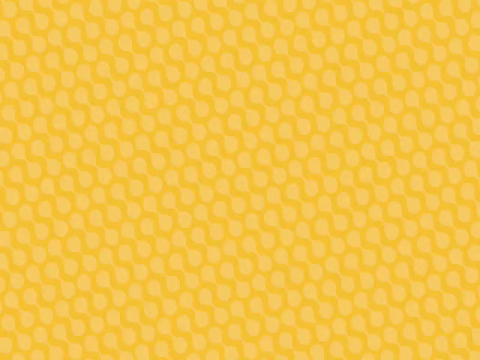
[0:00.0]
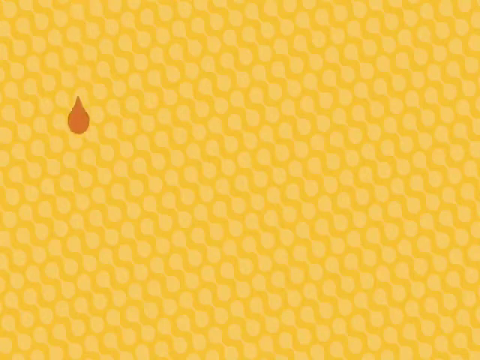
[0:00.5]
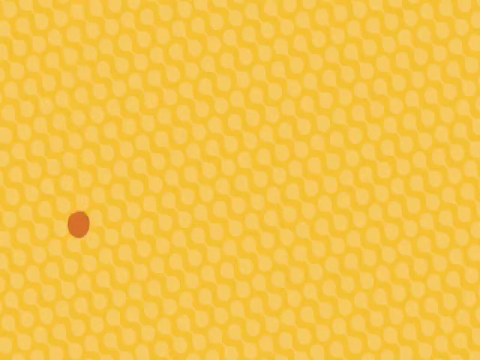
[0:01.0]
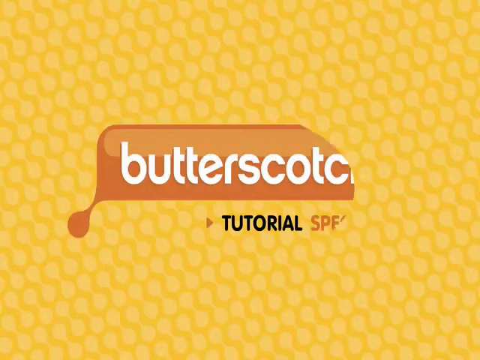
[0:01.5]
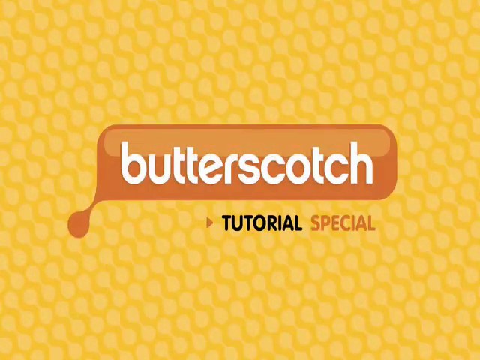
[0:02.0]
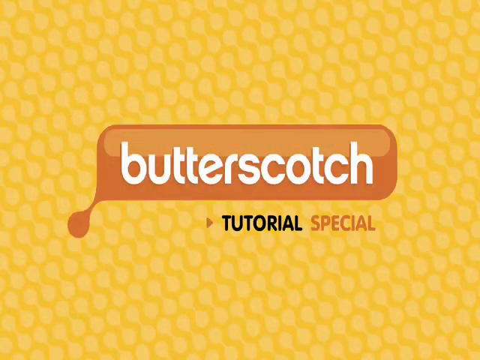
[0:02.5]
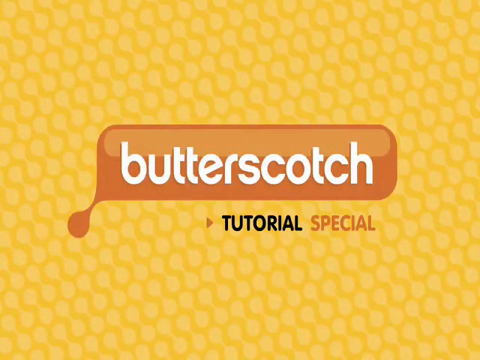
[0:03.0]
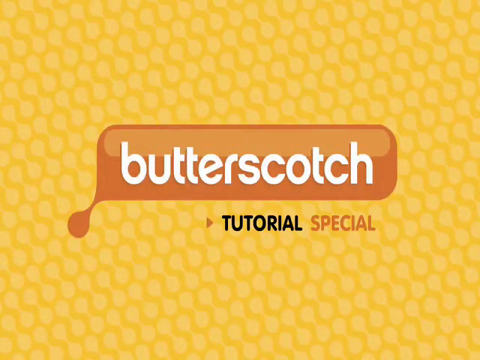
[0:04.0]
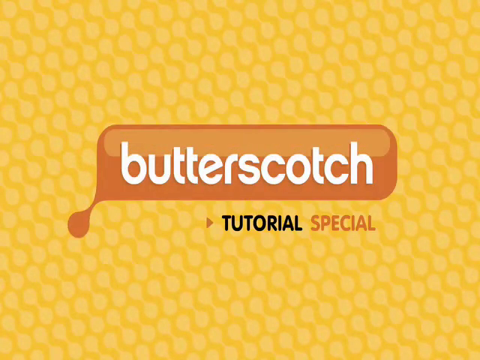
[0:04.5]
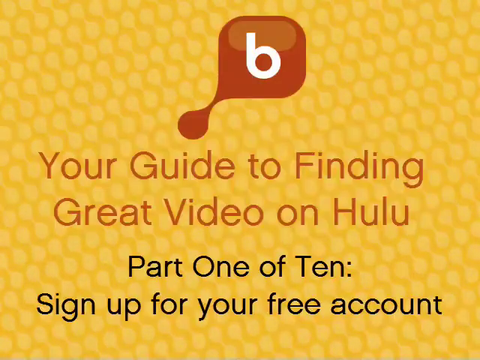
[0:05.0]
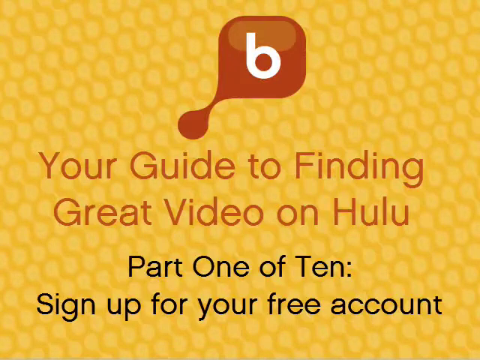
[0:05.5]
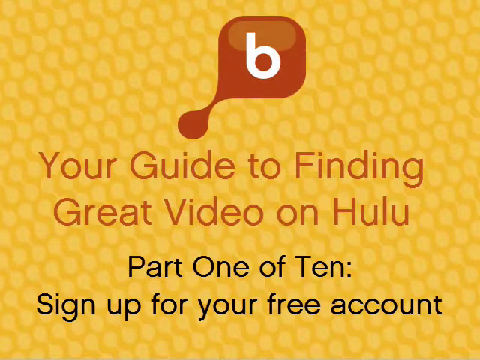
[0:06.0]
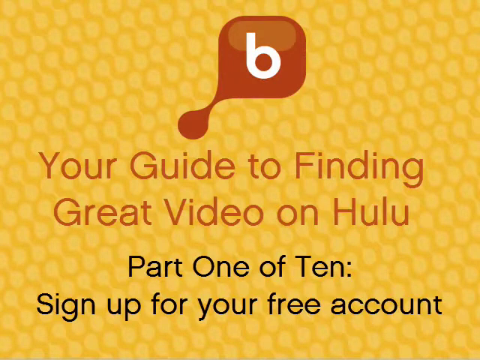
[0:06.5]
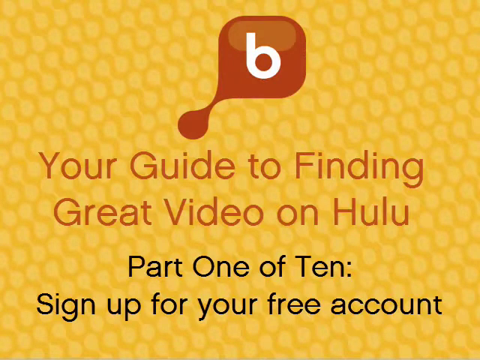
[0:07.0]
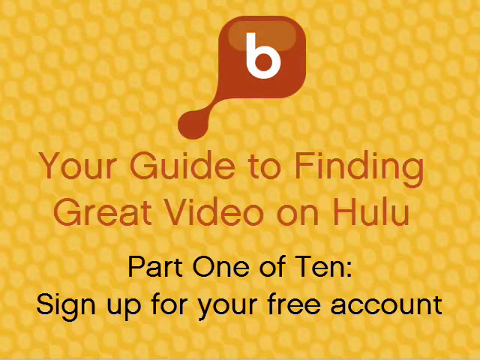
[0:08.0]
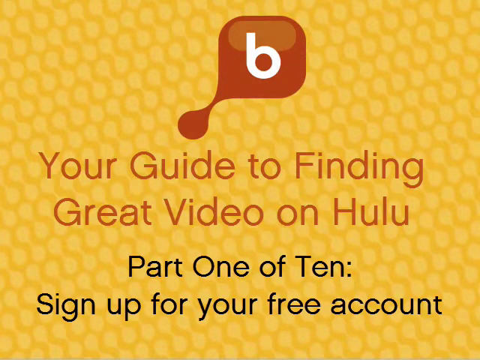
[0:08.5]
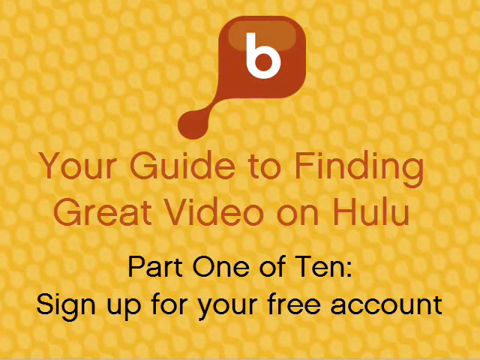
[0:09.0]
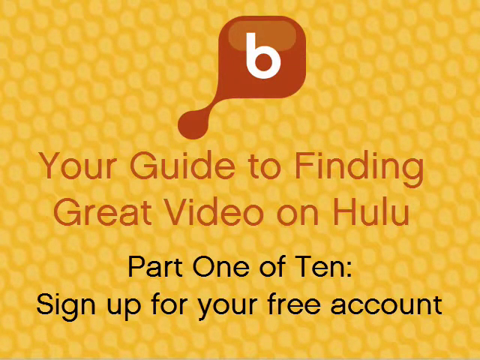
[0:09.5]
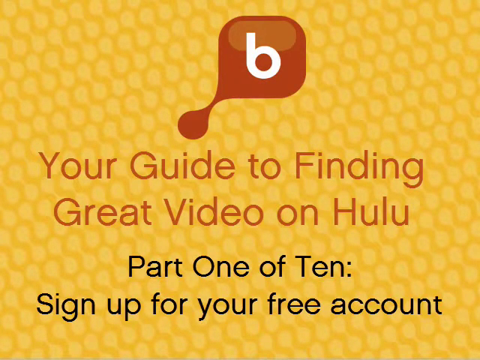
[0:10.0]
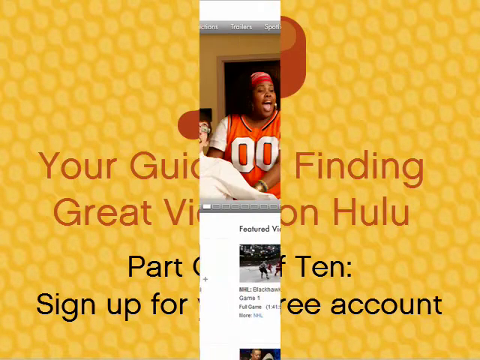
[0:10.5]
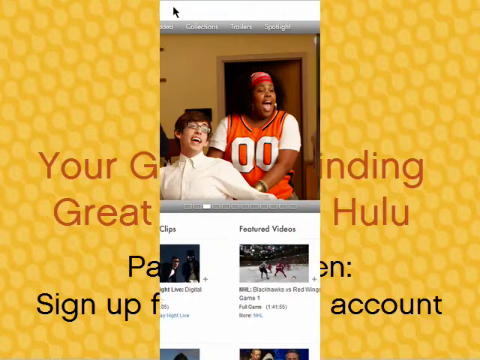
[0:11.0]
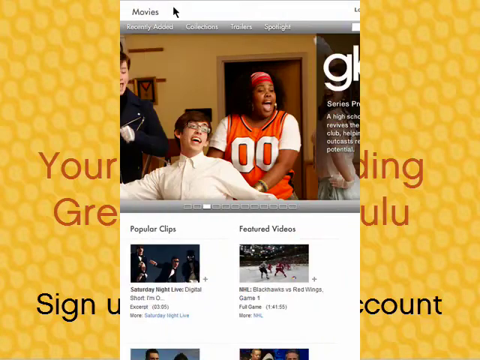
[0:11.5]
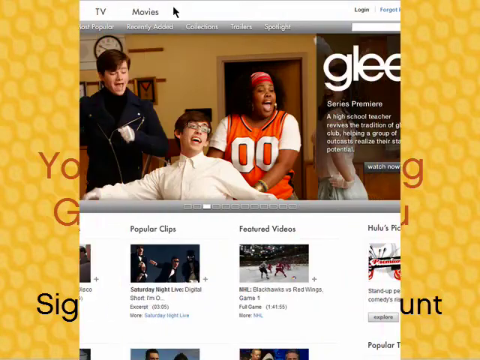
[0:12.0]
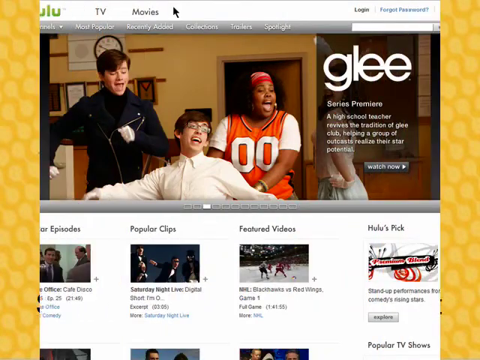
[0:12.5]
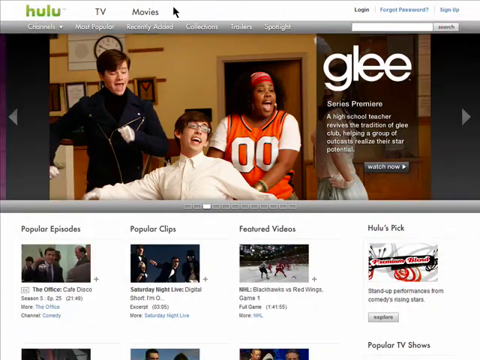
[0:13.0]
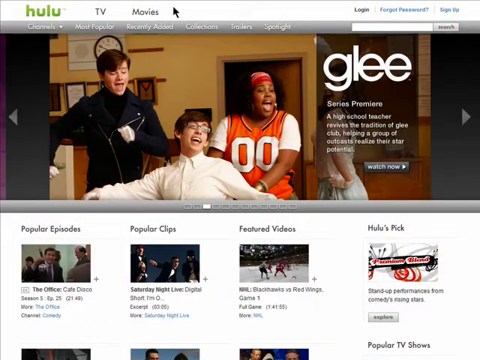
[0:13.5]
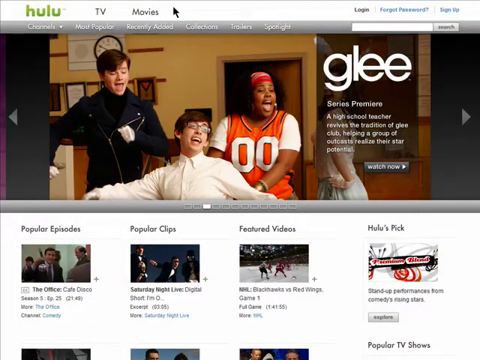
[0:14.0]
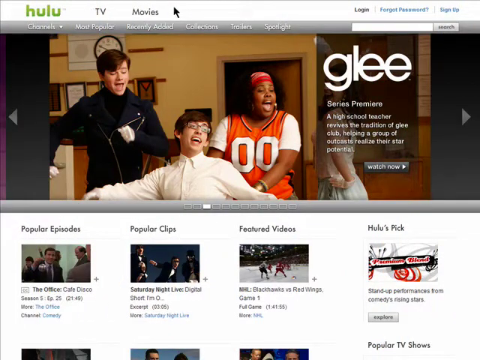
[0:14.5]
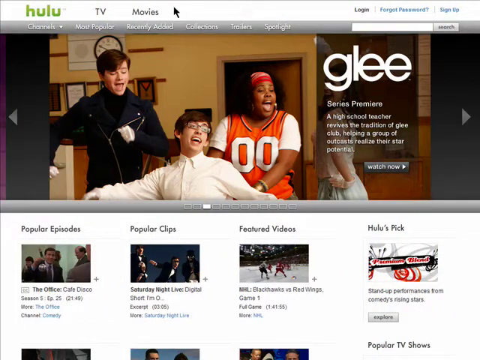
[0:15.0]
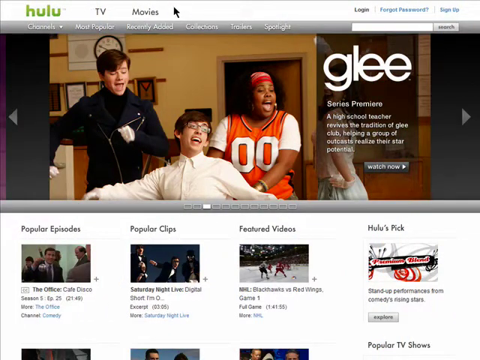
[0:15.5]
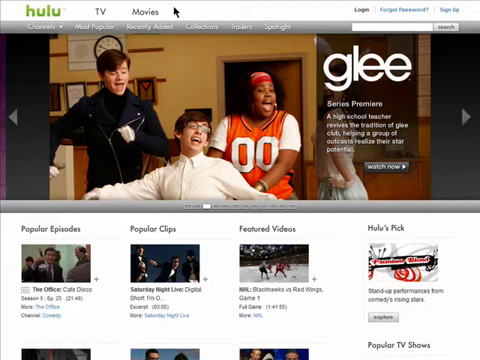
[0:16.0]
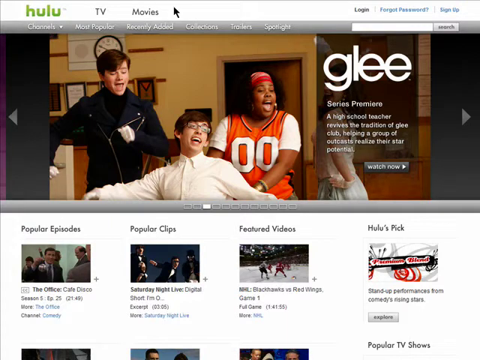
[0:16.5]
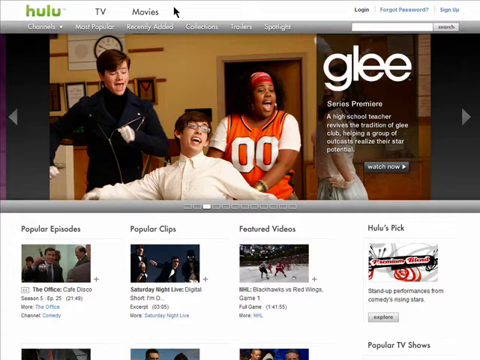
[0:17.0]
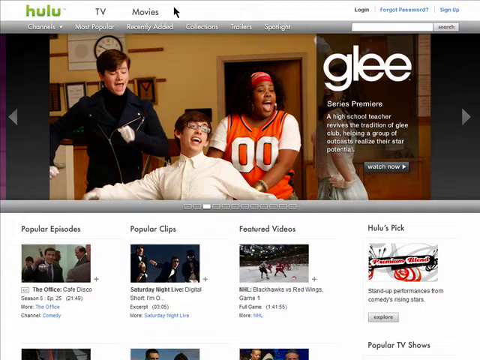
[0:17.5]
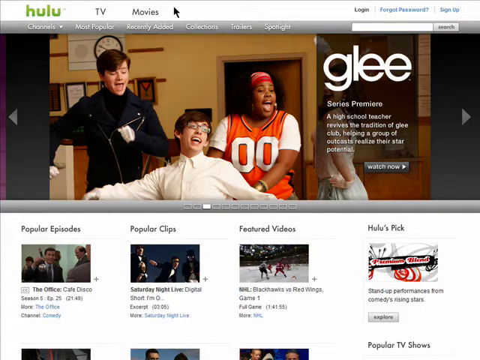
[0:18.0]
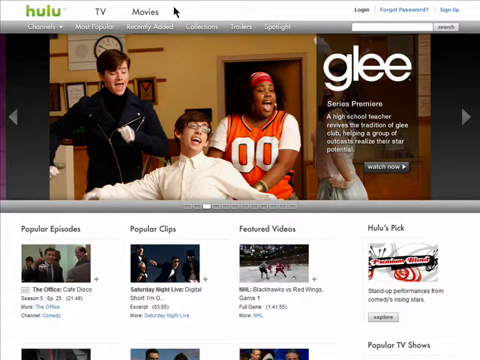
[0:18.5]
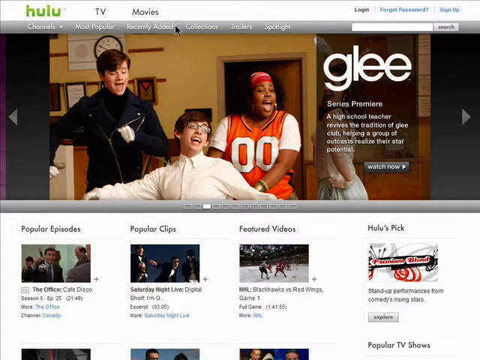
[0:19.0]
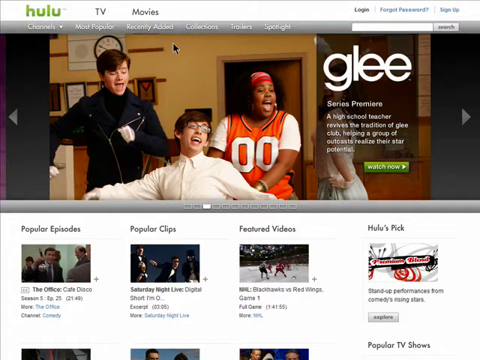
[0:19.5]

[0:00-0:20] A yellow background shows an orange rectangle reading "butterscotch tutorial special." Next comes "your guide to finding great videos on hulu part 1 of 10 sign up for your free account." The Hulu website then appears, with TV, movies and other sections, and an option to log in. A popular episode, previous videos and Hulu pics are visible. The man moves his cursor to the center, where Glee is featured as a series premiere with the text "a high school teacher revives the tradition of glee club helping a group of outcasts realize their star potential." There are also sections for most popular, recently added, collections, trailers and spotlight. A search bar is at the top right, and at the bottom are suggestions such as The Office, Cafe Disco, Saturday Night Live and an NHL game.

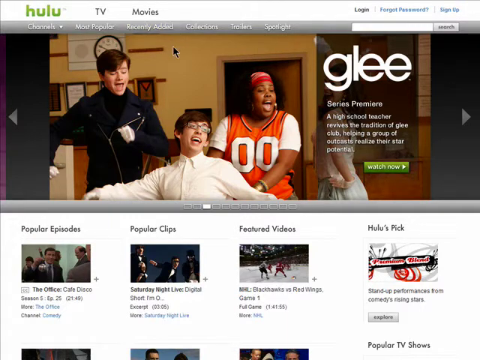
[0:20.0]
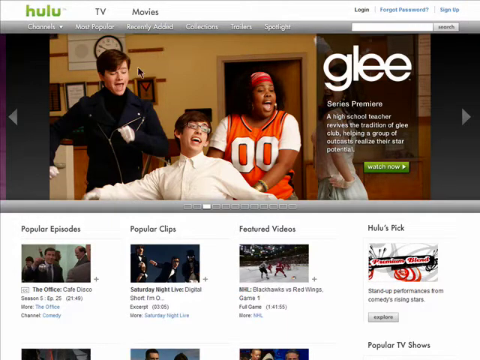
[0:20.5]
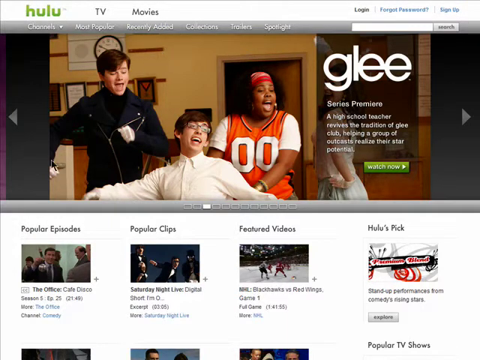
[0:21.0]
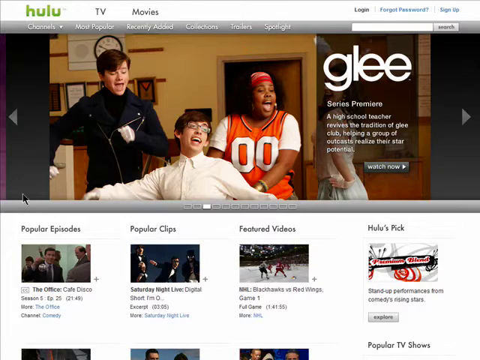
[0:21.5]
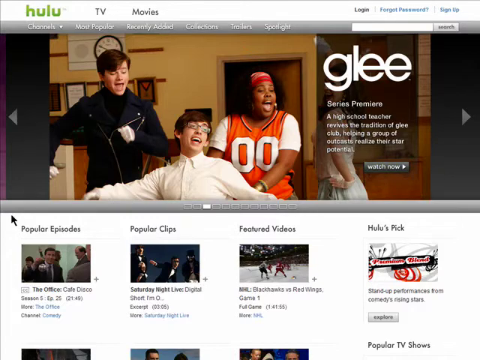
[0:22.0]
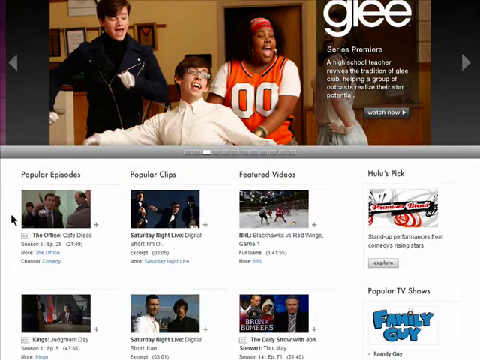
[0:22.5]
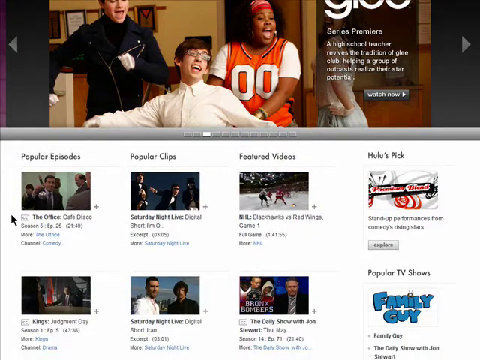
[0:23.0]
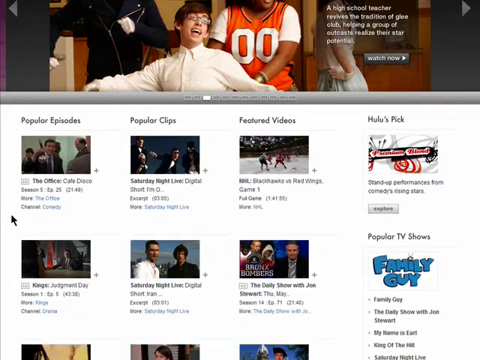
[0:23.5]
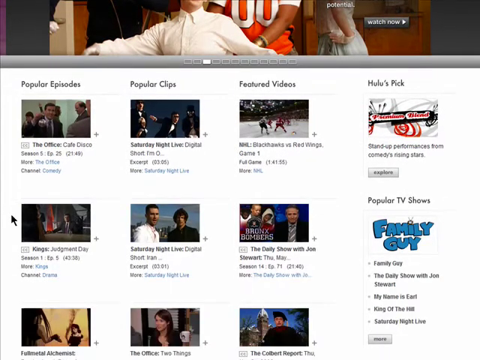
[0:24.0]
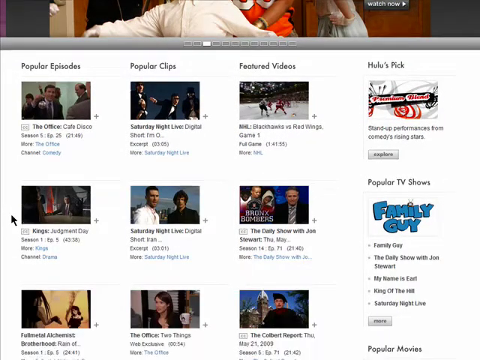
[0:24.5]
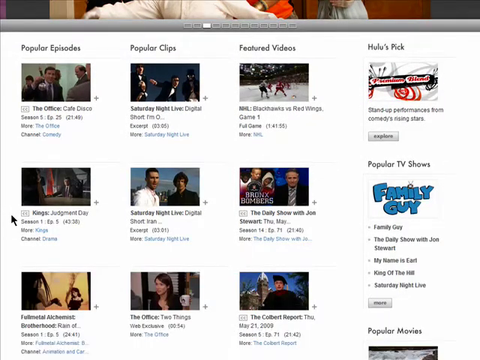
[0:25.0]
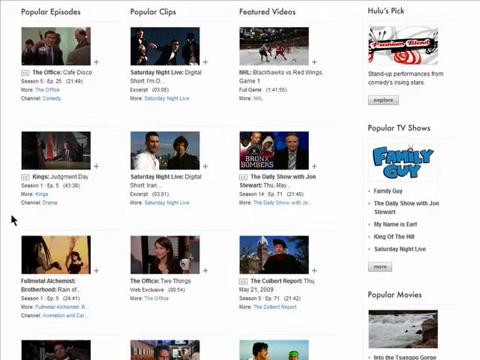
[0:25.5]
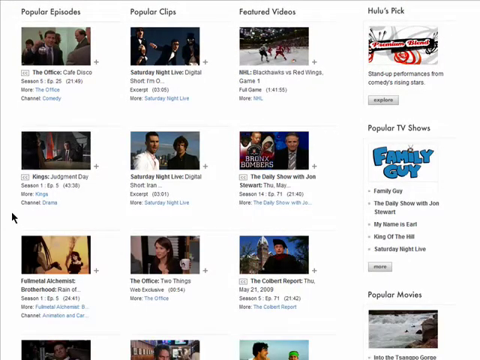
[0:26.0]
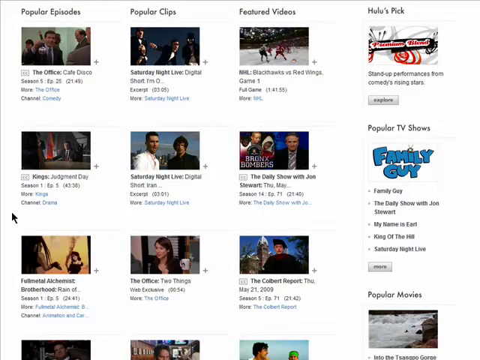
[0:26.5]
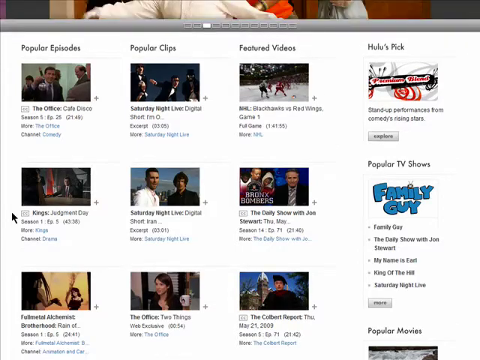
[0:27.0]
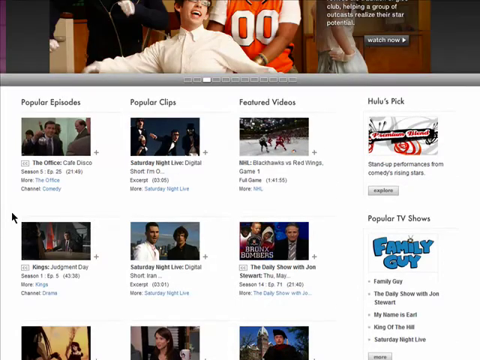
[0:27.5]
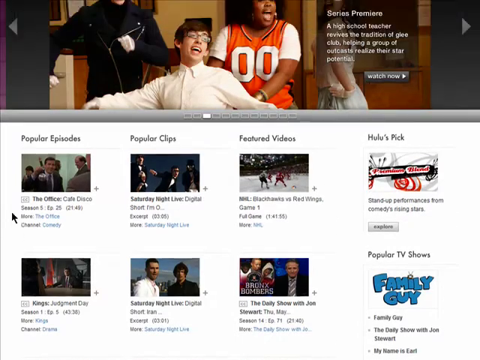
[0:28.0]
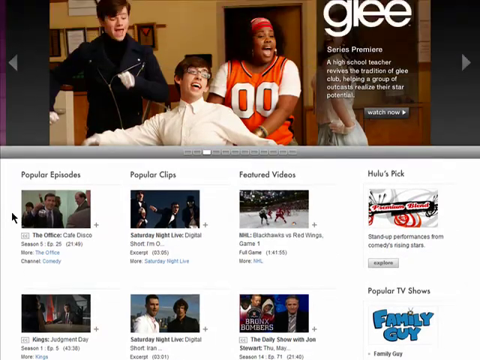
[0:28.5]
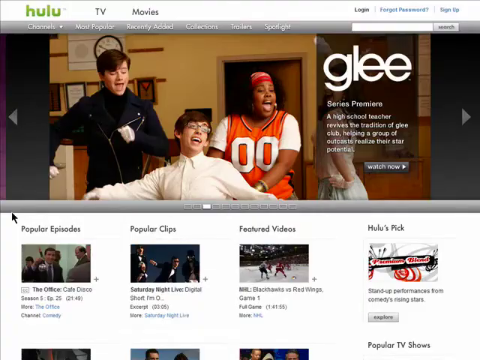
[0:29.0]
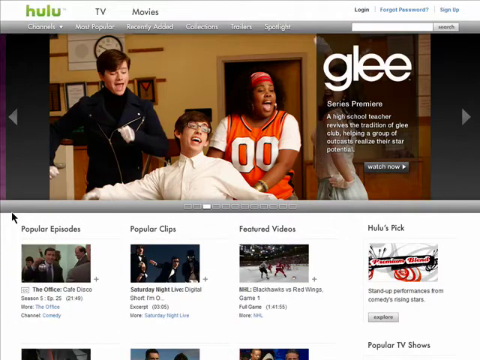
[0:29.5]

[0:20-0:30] The Hulu main screen shows sections such as TV and movies, plus more episodes, popular clips, featured videos and Hulu pics, including a popular episode of The Office, Cafe Disco. In the center of the site is a recommendation for the Glee series premiere, reading "A high school teacher revives the tradition of Glee Club, helping a group of kids reach their star potential." More popular episodes are visible, along with popular clips from Saturday Night Live, The Daily Show with Jon Stewart, The Office, and a Fullmetal Alchemist Brotherhood clip.